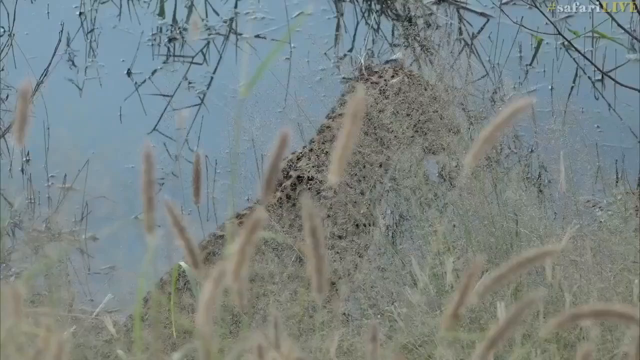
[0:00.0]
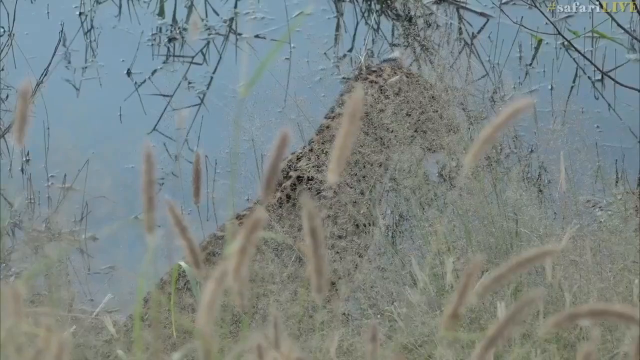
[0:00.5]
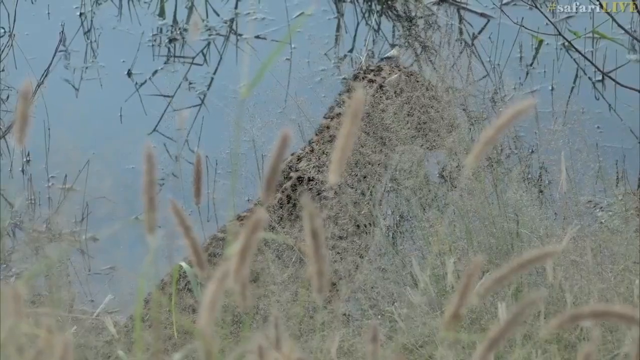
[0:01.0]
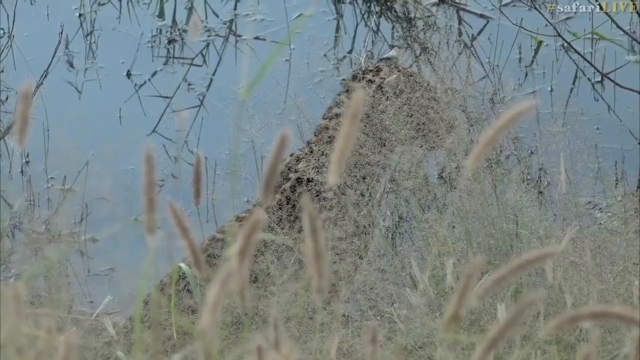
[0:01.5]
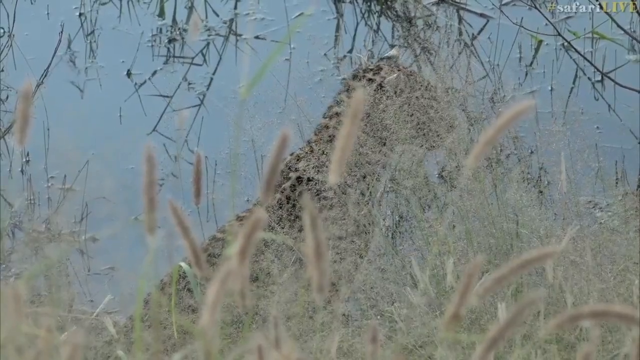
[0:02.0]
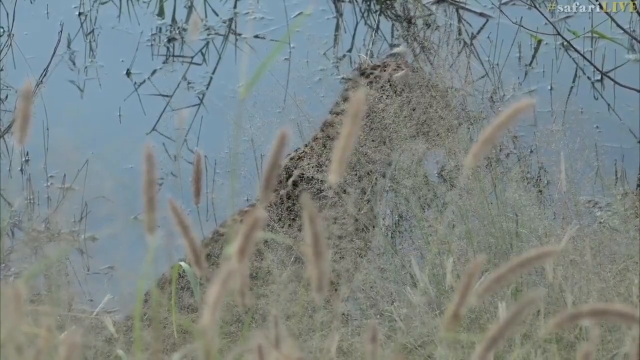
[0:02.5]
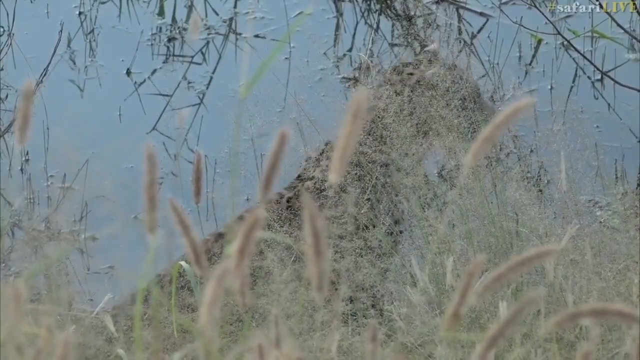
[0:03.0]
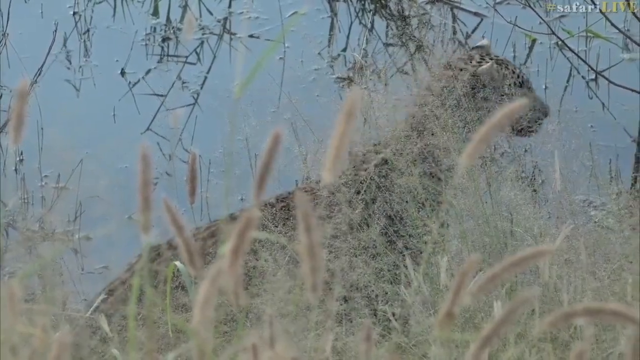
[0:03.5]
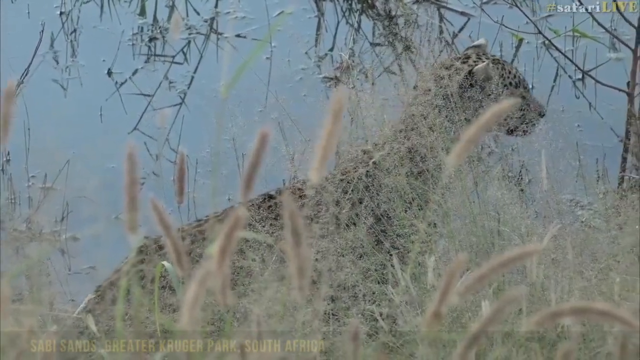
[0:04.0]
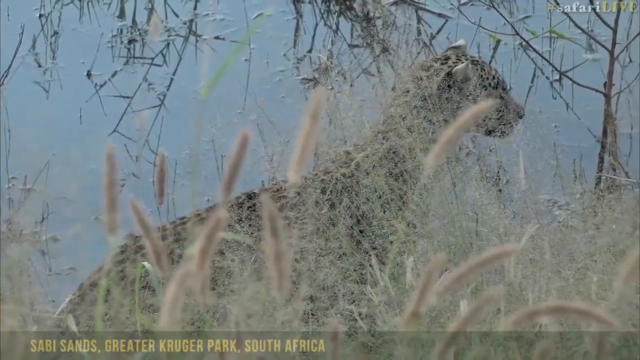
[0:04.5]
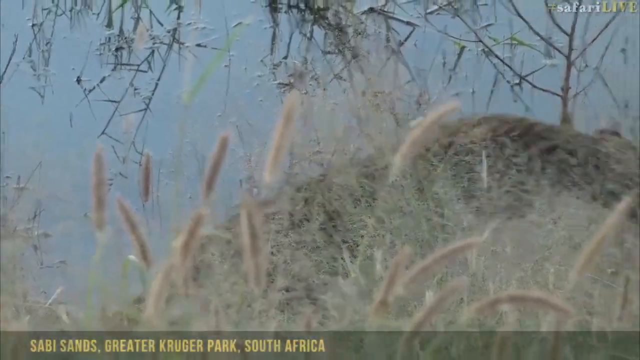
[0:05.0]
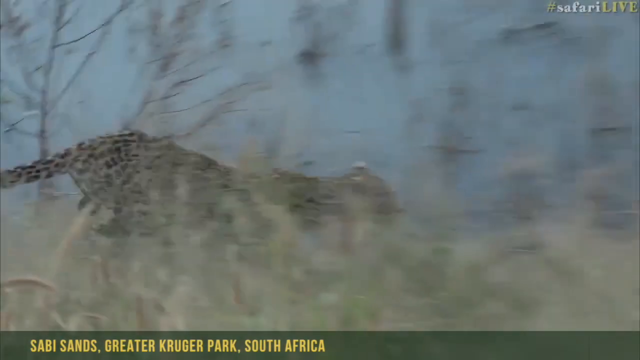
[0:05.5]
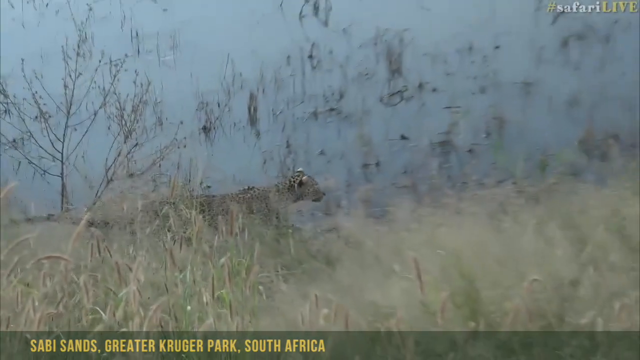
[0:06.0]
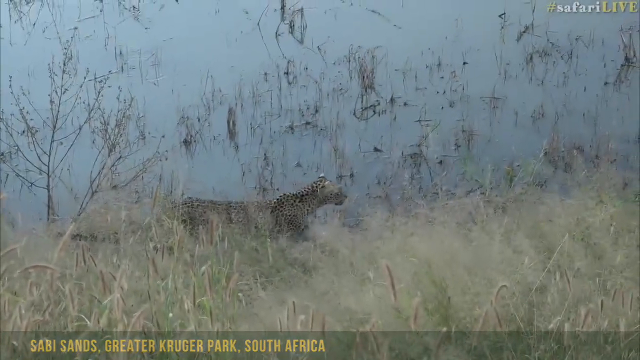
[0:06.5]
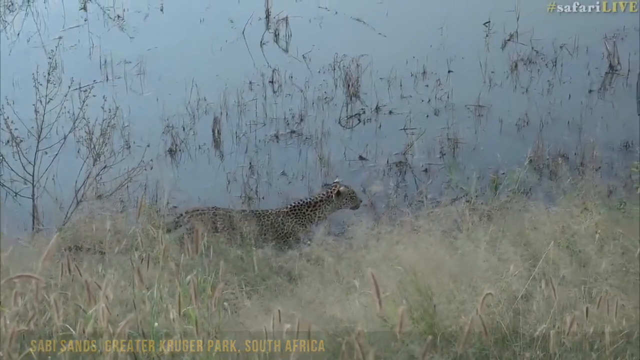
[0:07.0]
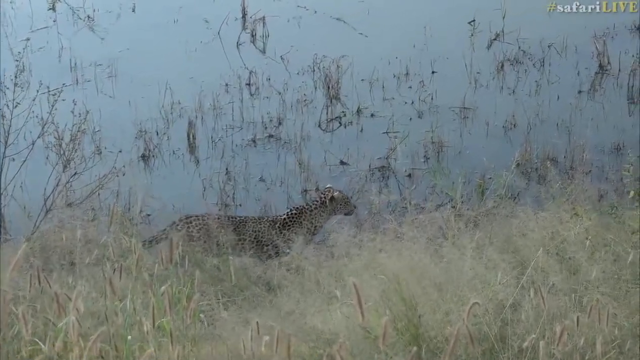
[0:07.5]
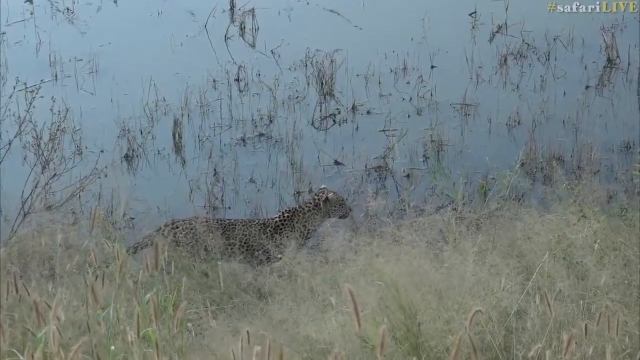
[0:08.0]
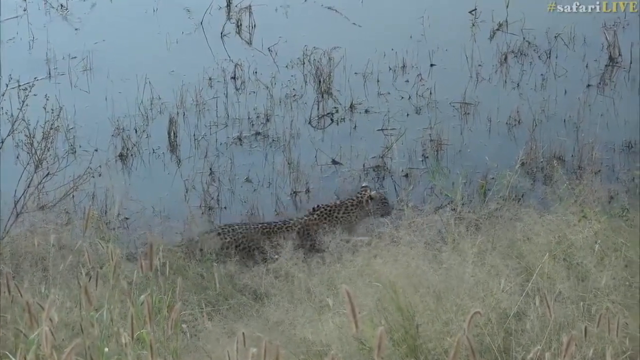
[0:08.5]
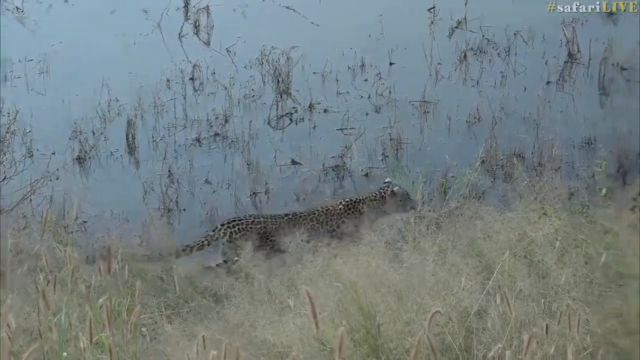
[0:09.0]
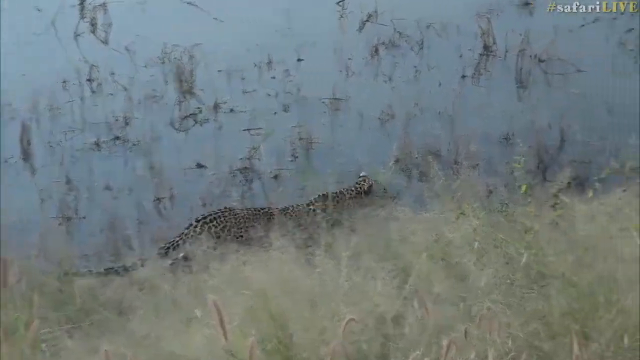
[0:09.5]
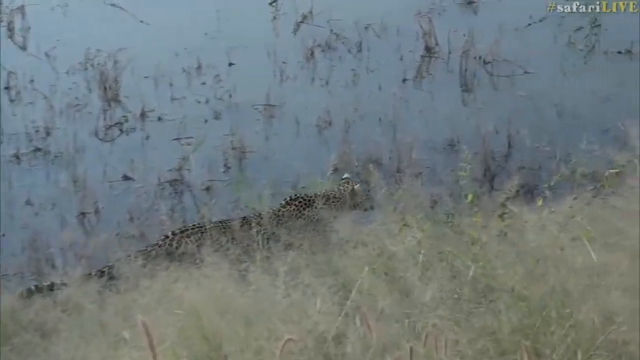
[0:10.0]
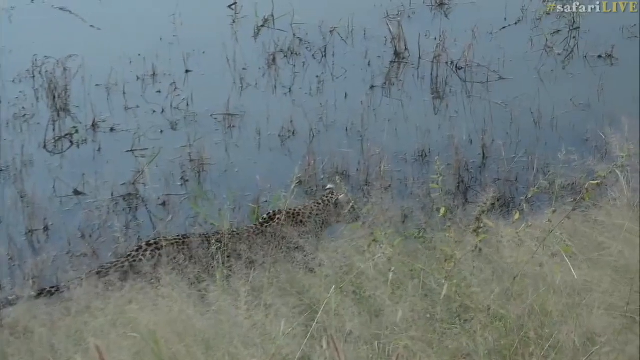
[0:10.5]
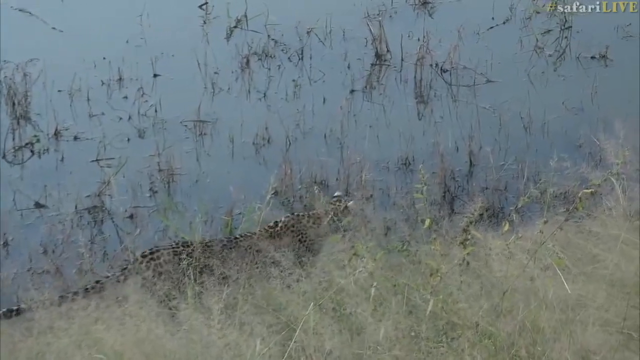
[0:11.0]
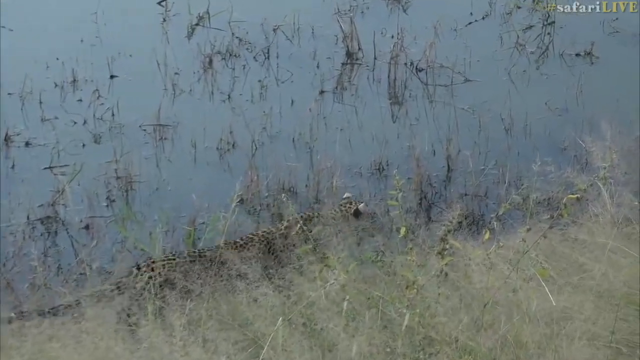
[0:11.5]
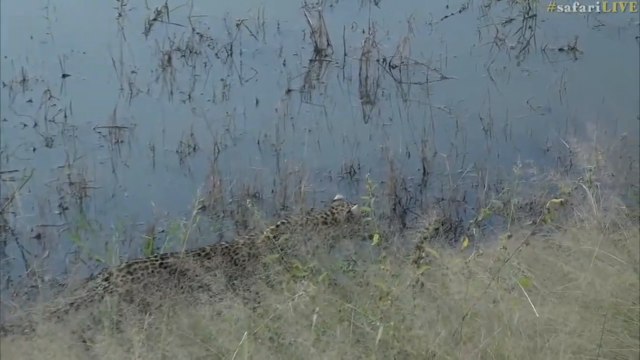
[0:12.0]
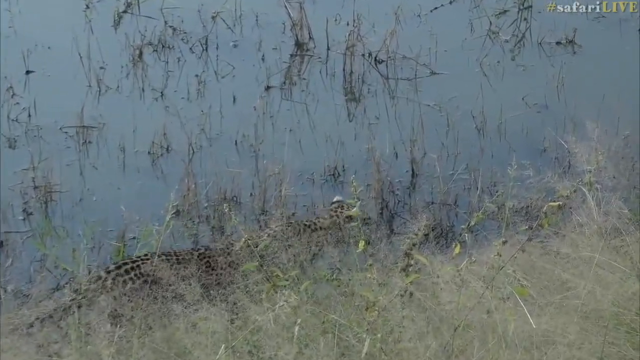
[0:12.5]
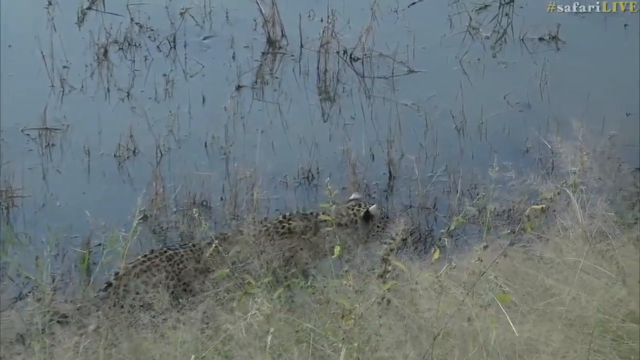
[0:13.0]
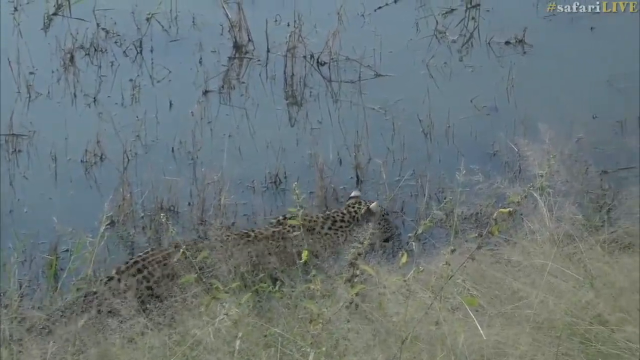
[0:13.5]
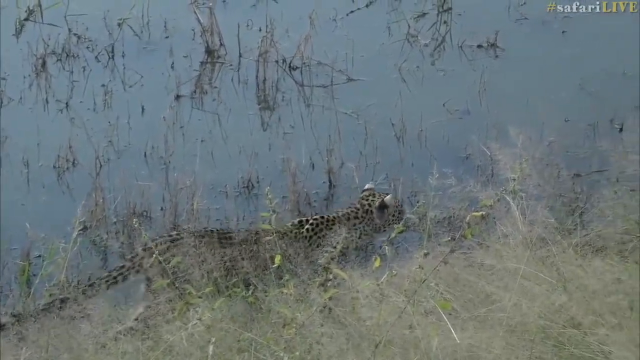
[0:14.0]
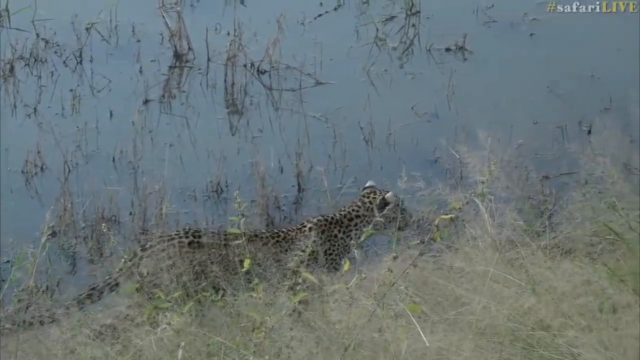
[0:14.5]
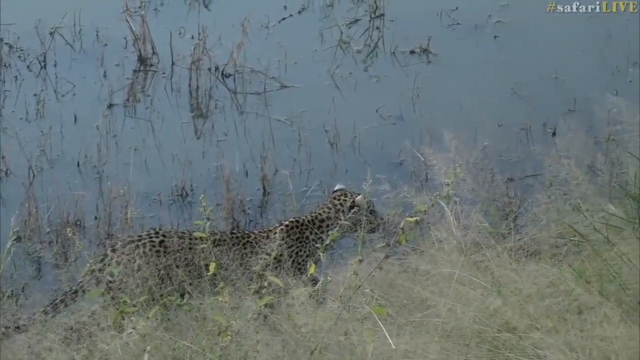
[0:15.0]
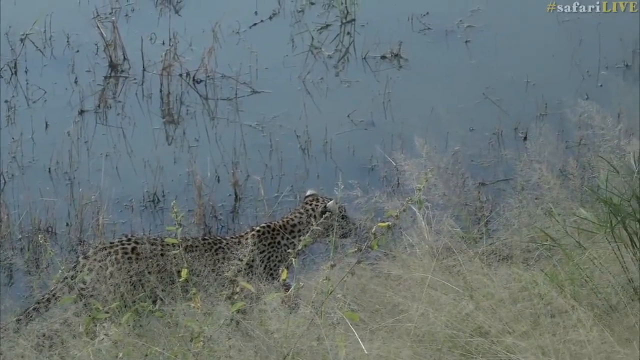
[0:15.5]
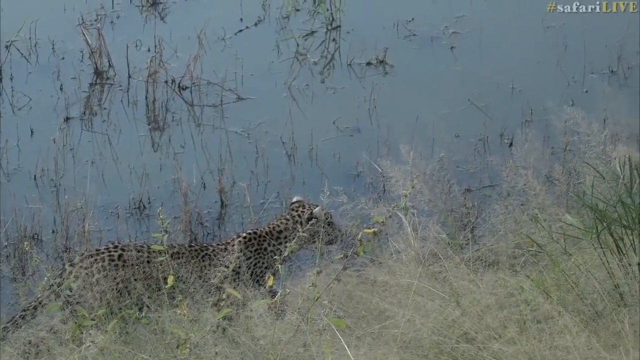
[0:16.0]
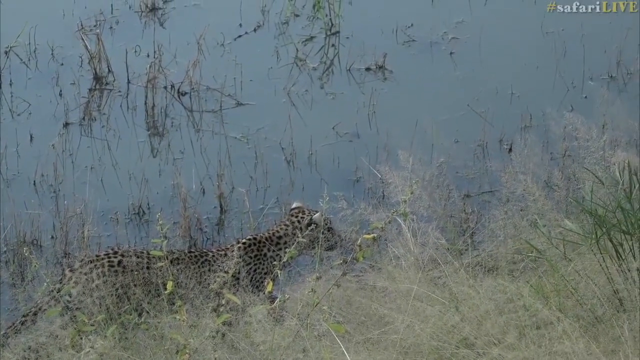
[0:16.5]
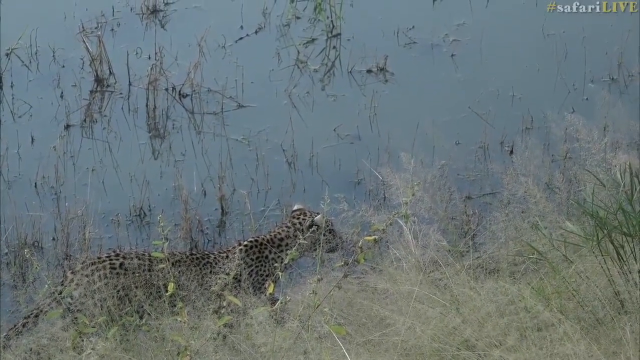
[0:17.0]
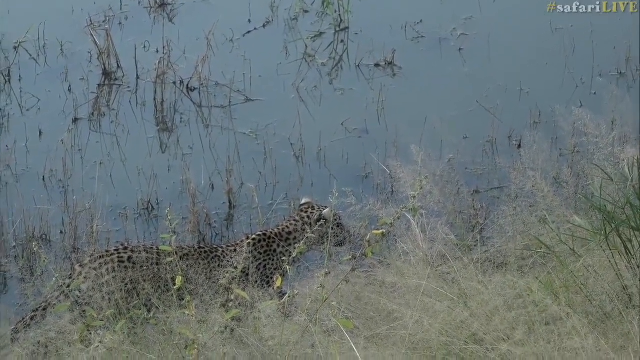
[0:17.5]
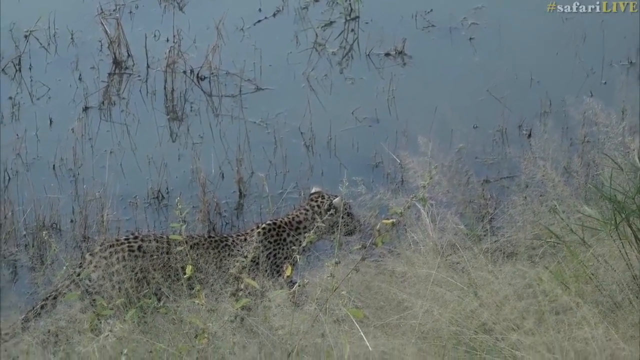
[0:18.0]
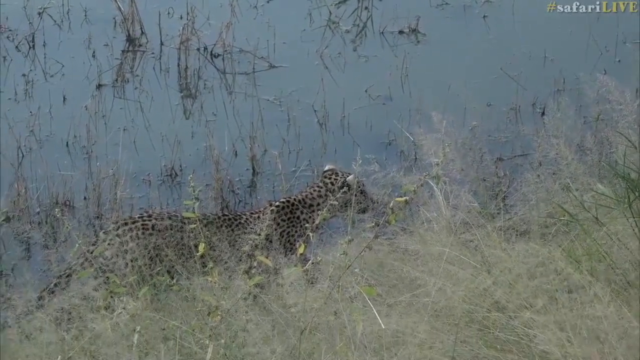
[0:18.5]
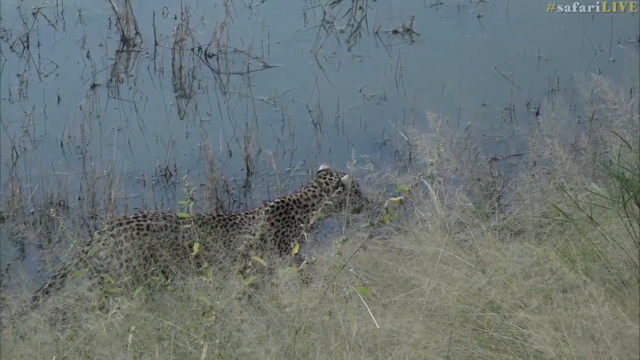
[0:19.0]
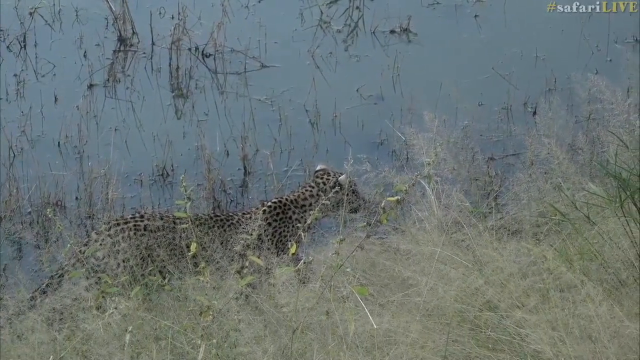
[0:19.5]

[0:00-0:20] This is a Safari Live recording. The camera slowly focuses on a cheetah, which moves slowly, observing the jungle during the day as it hunts for something to eat. It jumps from where it was toward the next spot to check what is next to the river, and the cheetah is then next to the river, hunting. Grass is visible, no longer green but brown. The picture is somewhat clear but not very clear, and the colours of the trees and of the water in the river cannot be made out. The cheetah seems to have seen something, moving close to the river as it hunts. The camera follows the cheetah closely, capturing every step it takes.